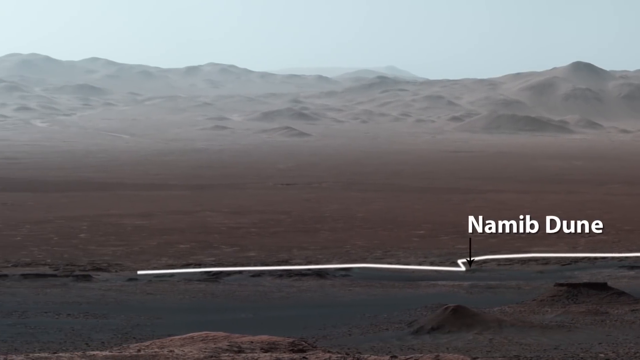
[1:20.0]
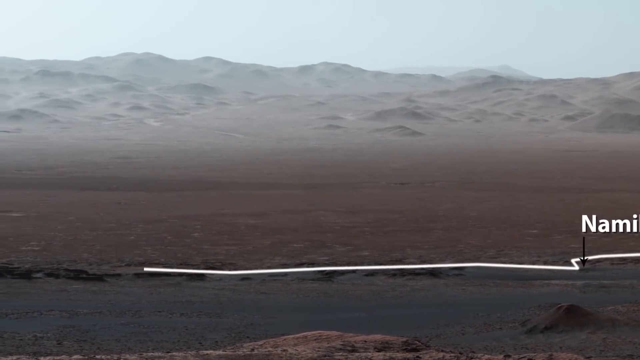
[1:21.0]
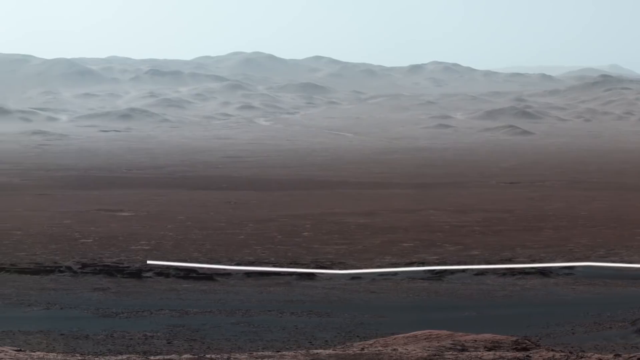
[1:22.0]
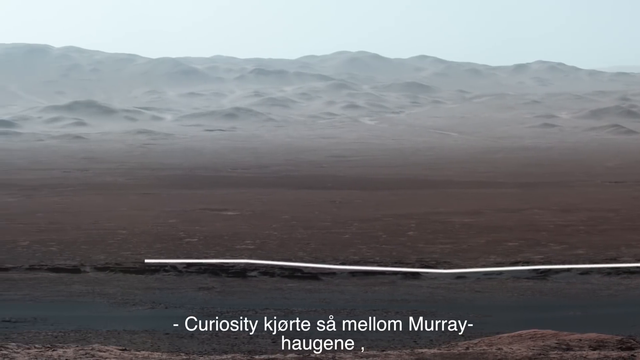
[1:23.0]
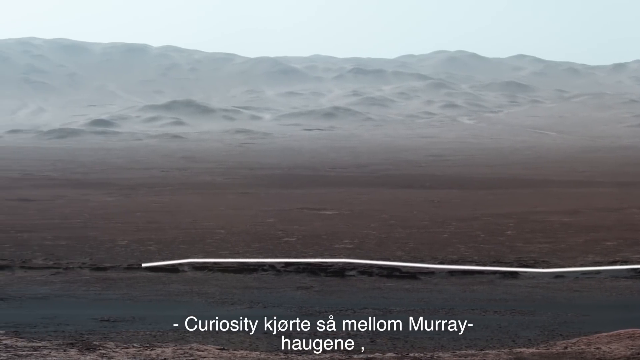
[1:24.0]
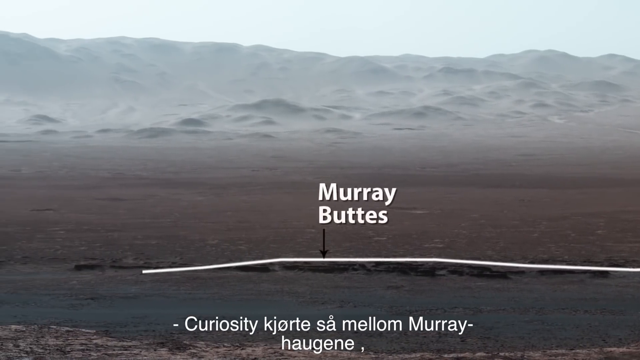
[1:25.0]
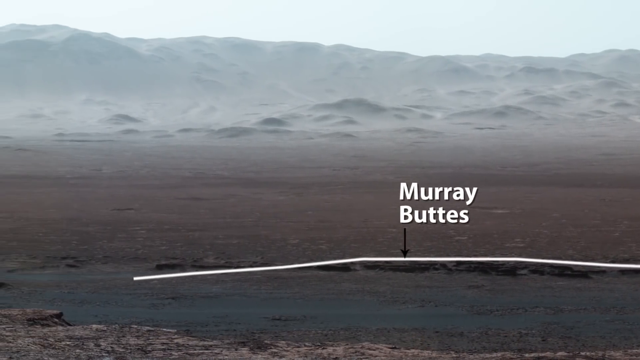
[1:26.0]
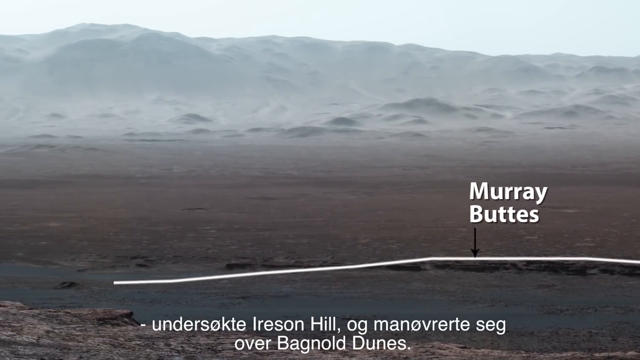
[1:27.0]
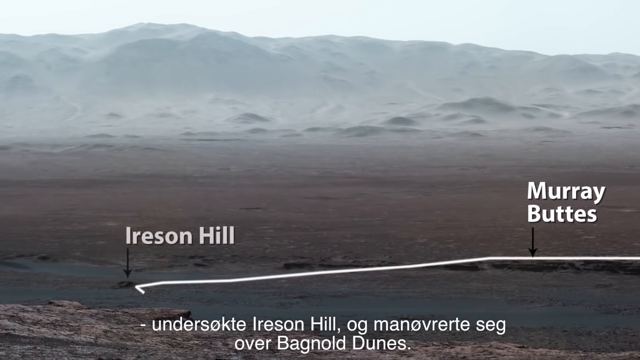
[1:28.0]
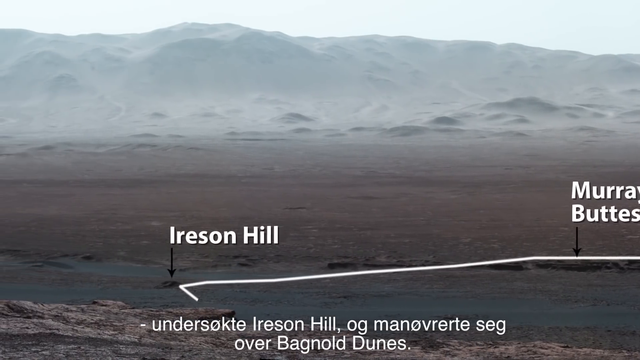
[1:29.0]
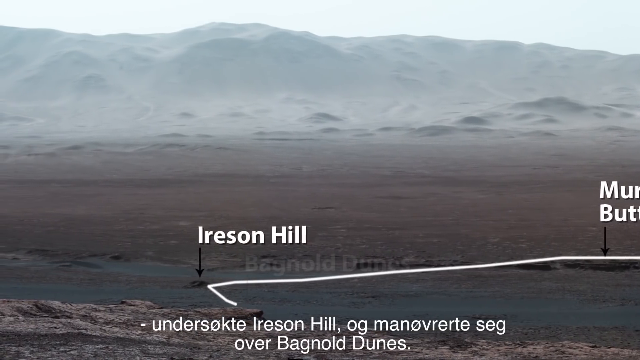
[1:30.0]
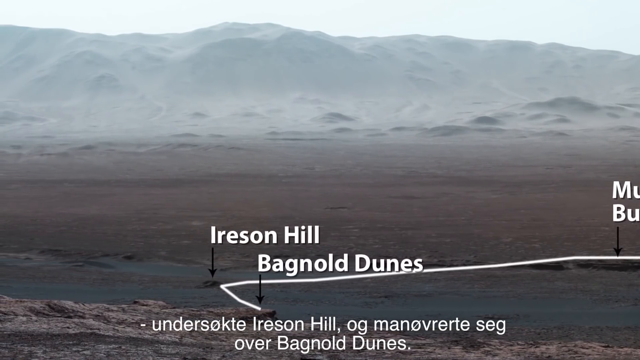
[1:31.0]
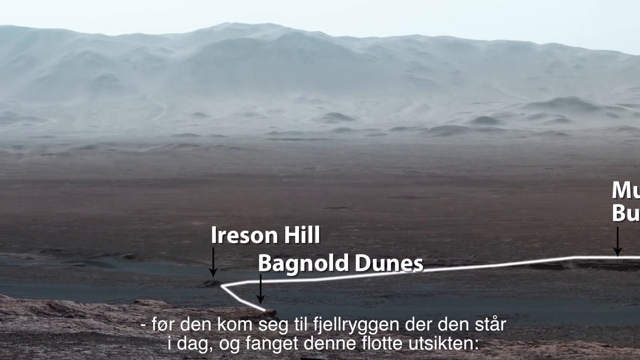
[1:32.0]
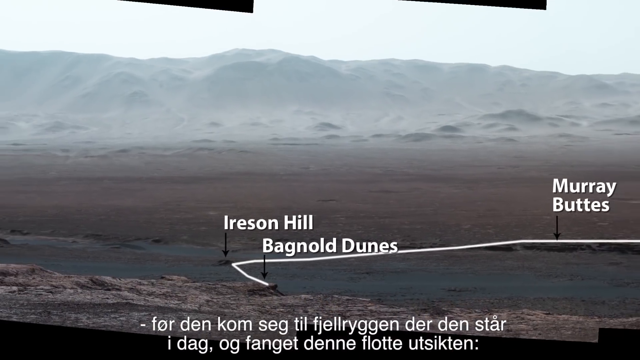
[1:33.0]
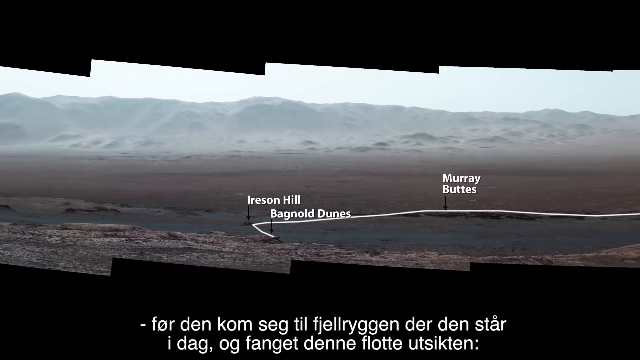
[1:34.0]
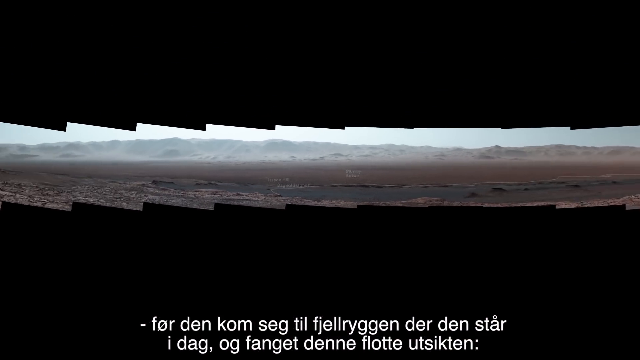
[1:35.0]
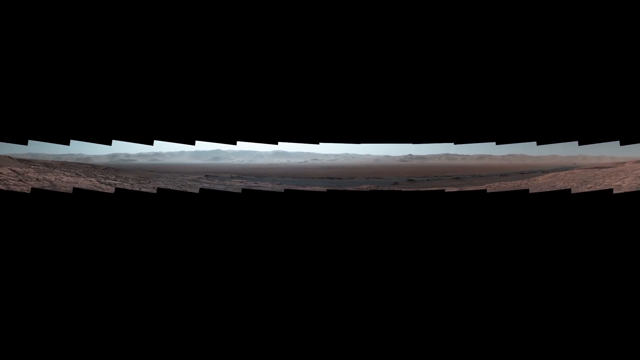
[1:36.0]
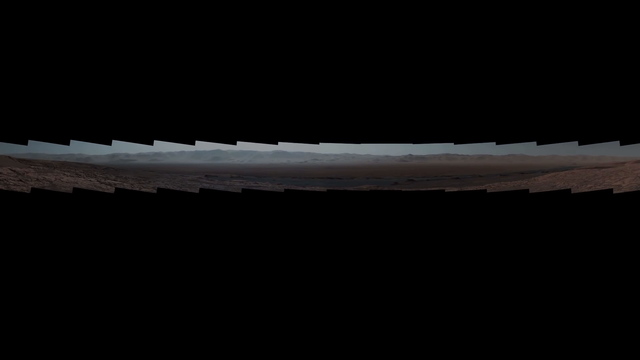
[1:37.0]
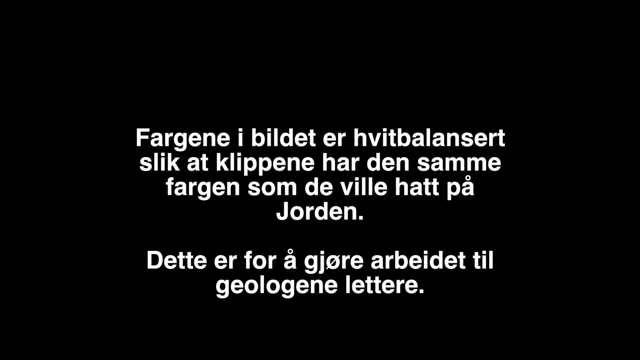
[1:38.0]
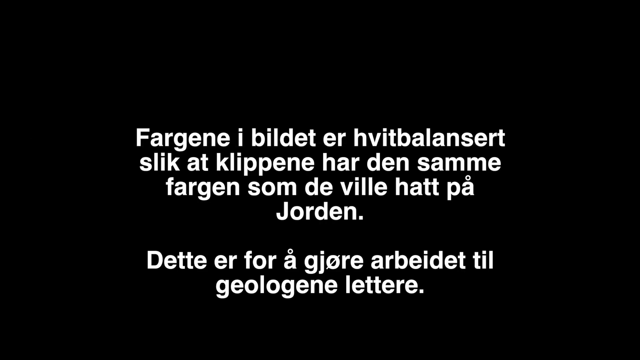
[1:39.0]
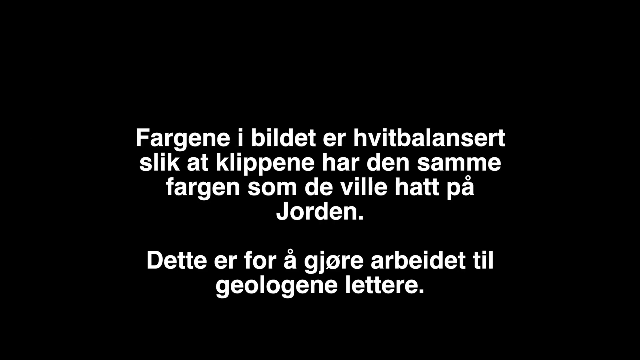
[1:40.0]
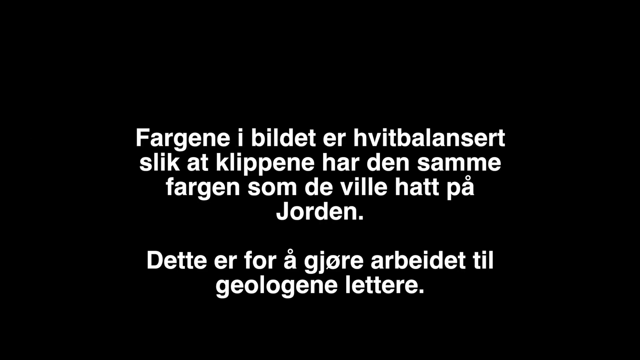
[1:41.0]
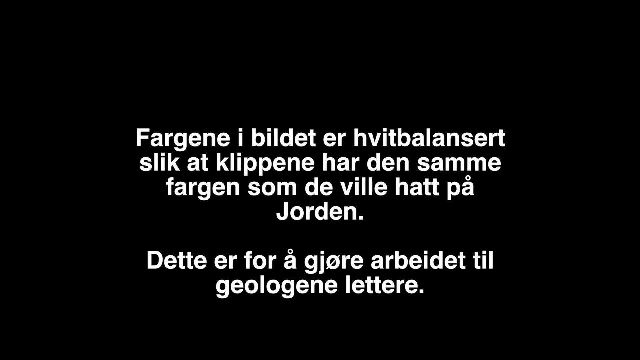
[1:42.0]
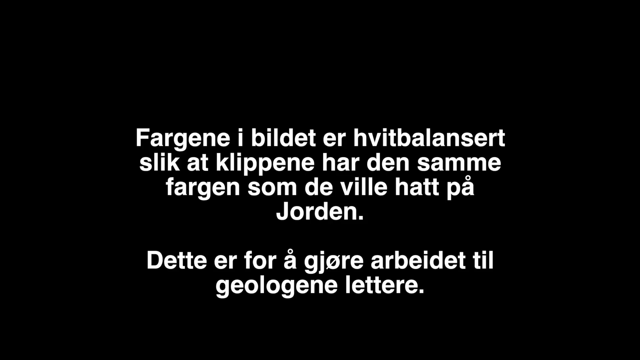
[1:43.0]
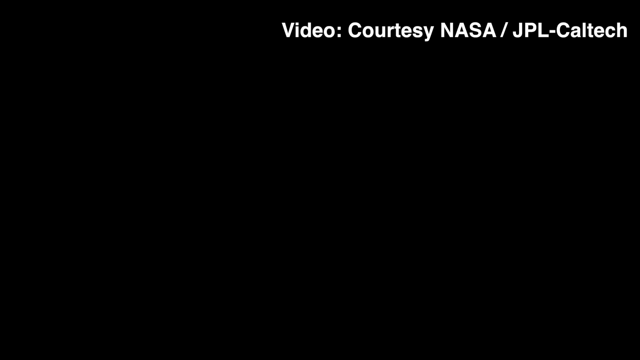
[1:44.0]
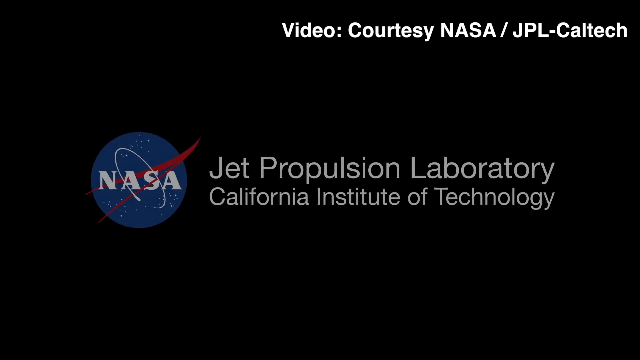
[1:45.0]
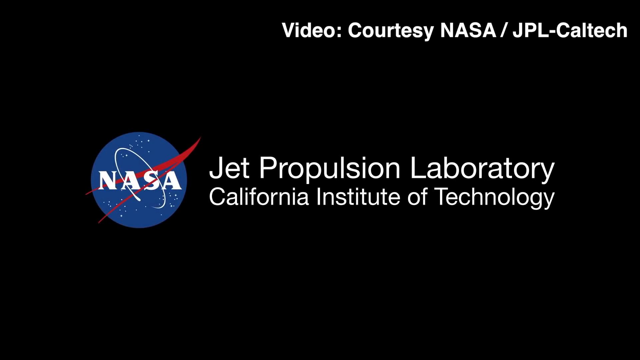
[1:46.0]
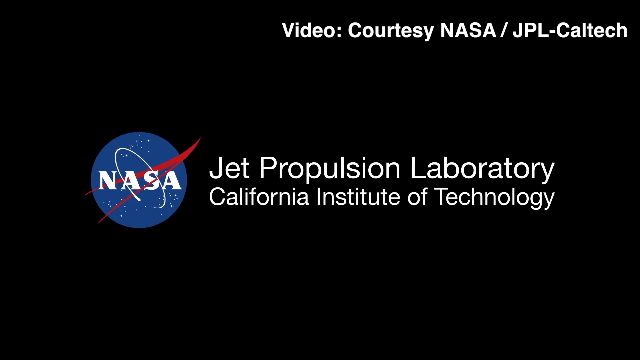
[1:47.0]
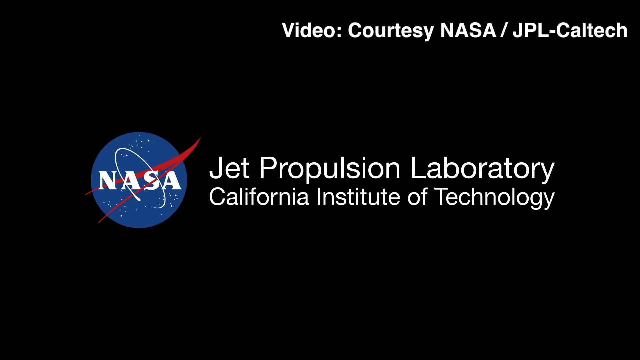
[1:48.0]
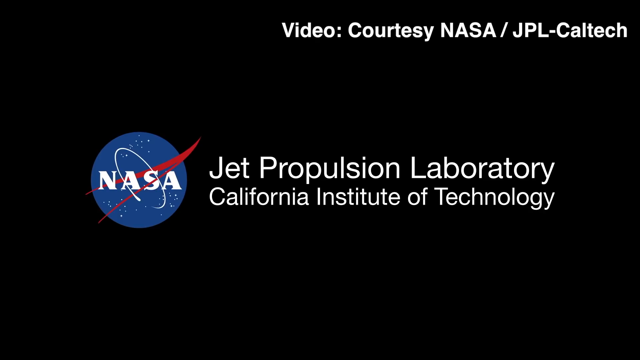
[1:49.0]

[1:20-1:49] A rocky area, which looks like a mountainous area, is in the background with a pile of rocks, under what looks to be a gray, somewhat blue sky. The ground is covered in dirt, with what looks to be a wet, muddy area. A white line appears with white text reading "Navid Dune" and a black arrow pointing to the ground. The camera continues to move left as the white line keeps going, and text in another language pops up at the bottom, with English words like "curiosity" and "murray". White text reading "Murray Buttes" appears with a black arrow pointing to the white line, and additional white text at the bottom reads "Iverson Hill" and "over Bagnold Dunes". White text reading "Iverson Hill" then appears with a black arrow pointing to the ground, and the white line comes downward and begins to go to the right, reaching white text reading "Bagnold Dunes" with a black arrow. The camera then moves out to show a very long landscape view of the area in a roughly square picture, and text in a different language pops up on a black background. The video then transitions to a black background with white text reading "video courtesy of NASA JPL Caltech", along with the NASA logo and the text "Jet Propulsion Laboratory California Institute of Technology".